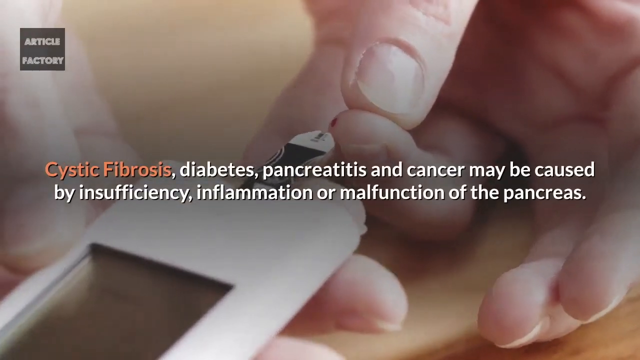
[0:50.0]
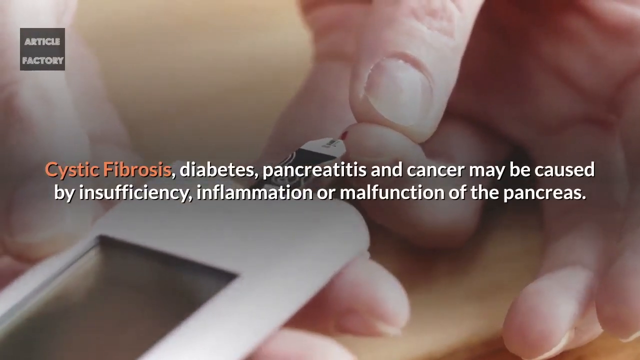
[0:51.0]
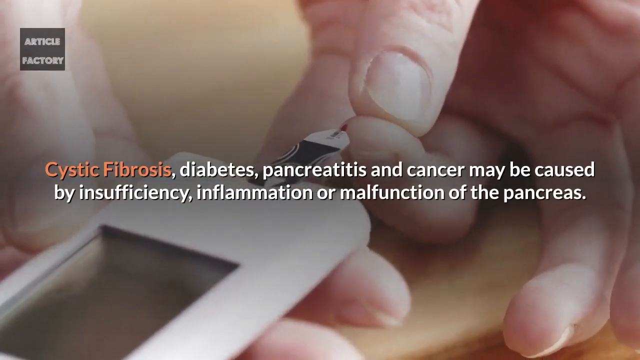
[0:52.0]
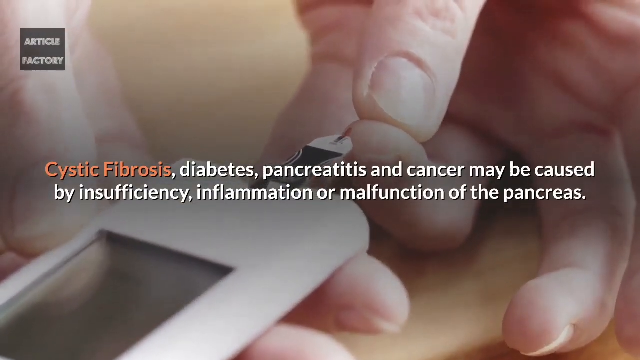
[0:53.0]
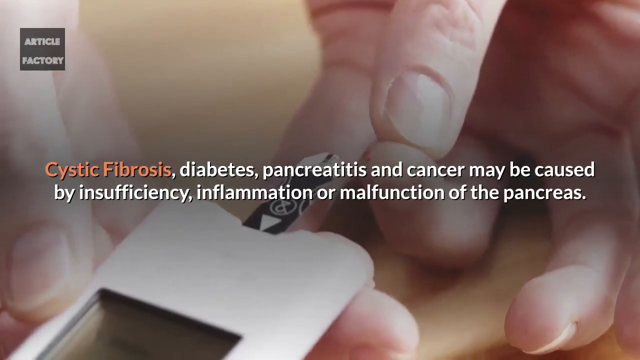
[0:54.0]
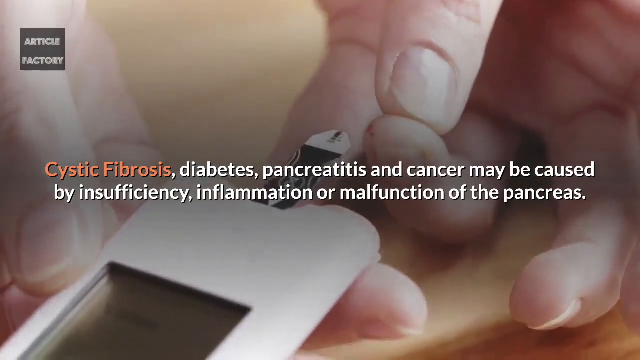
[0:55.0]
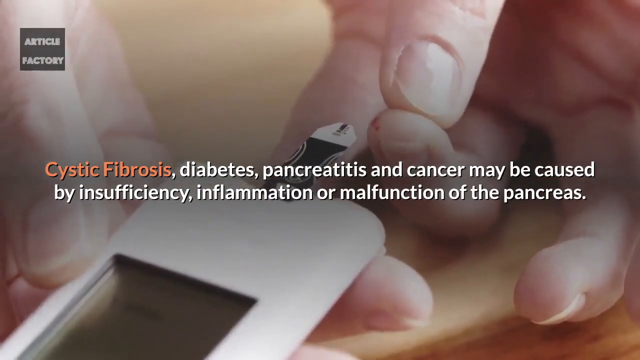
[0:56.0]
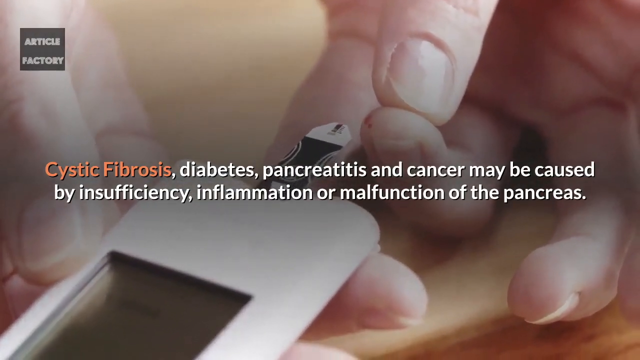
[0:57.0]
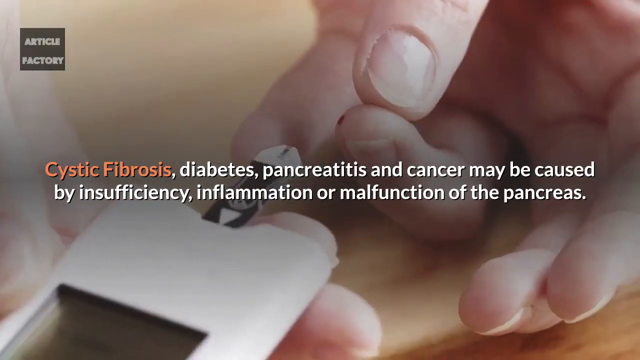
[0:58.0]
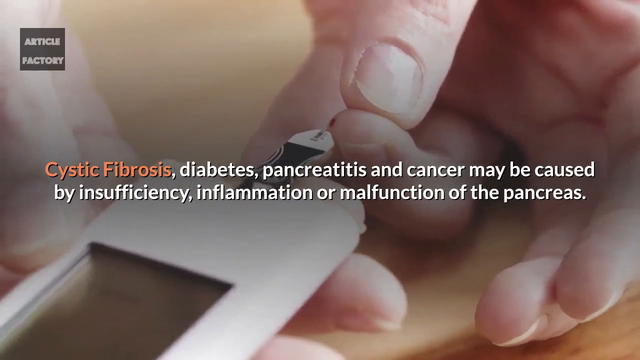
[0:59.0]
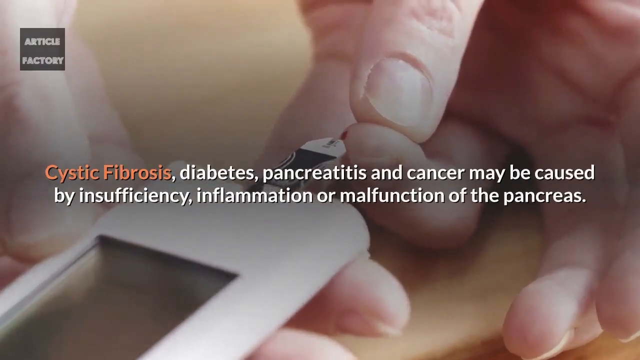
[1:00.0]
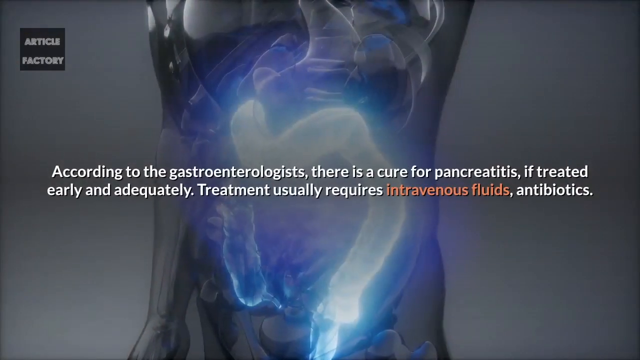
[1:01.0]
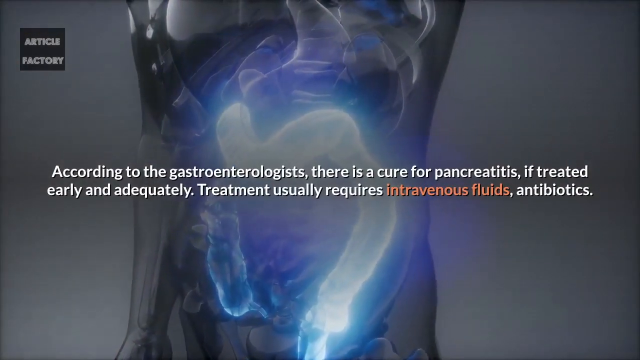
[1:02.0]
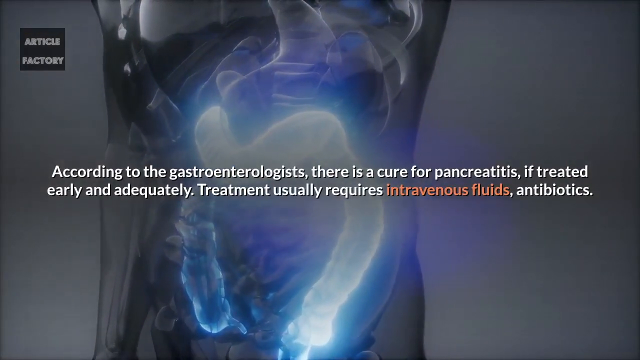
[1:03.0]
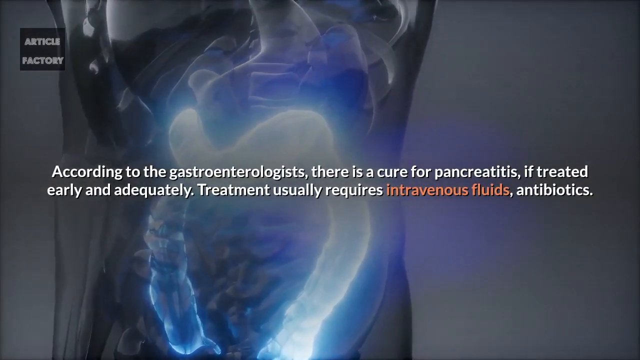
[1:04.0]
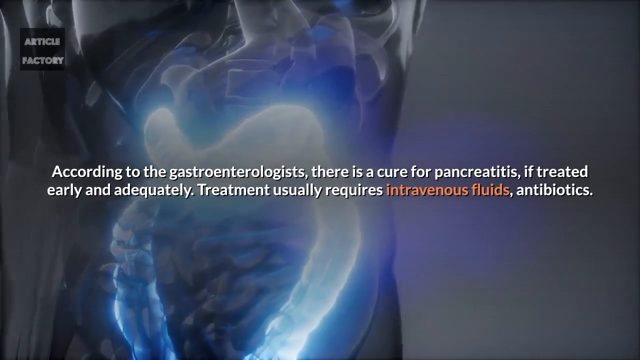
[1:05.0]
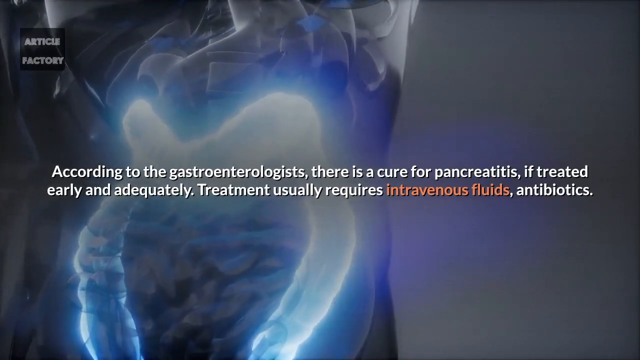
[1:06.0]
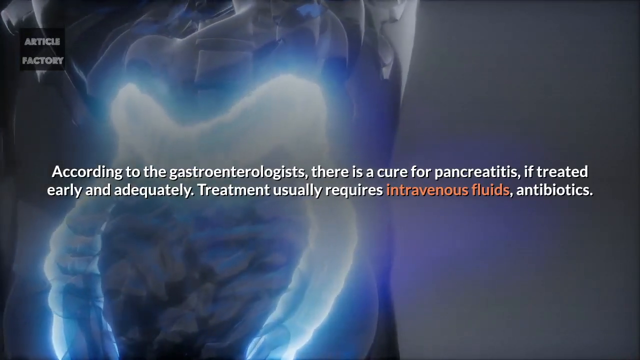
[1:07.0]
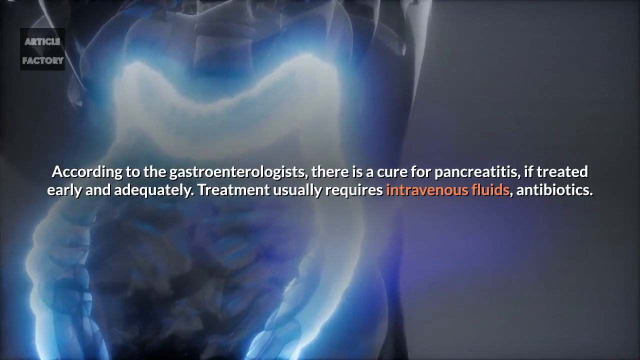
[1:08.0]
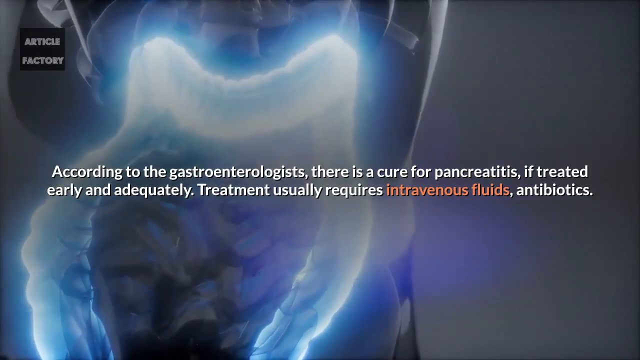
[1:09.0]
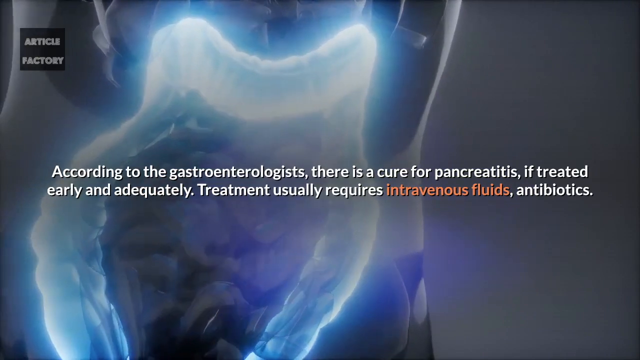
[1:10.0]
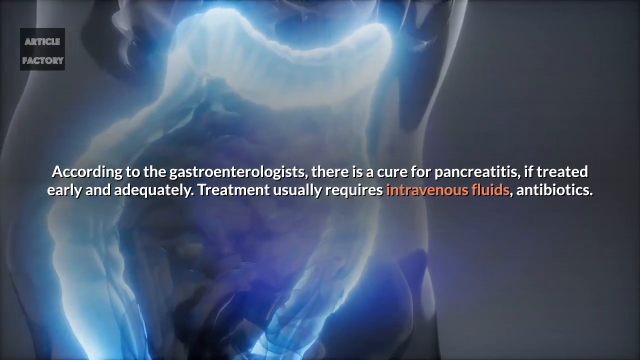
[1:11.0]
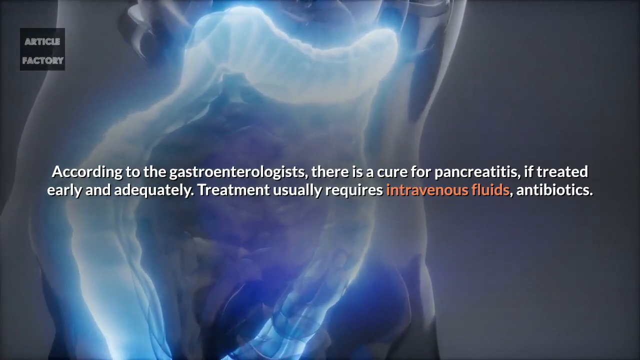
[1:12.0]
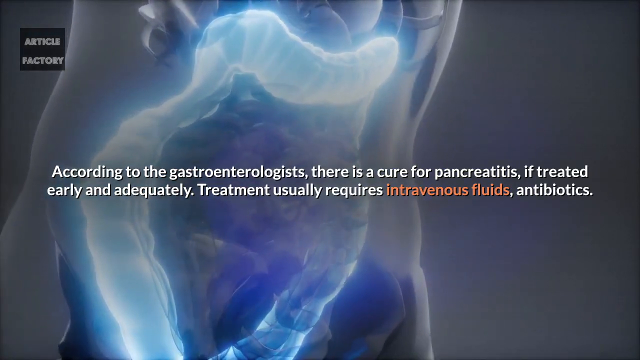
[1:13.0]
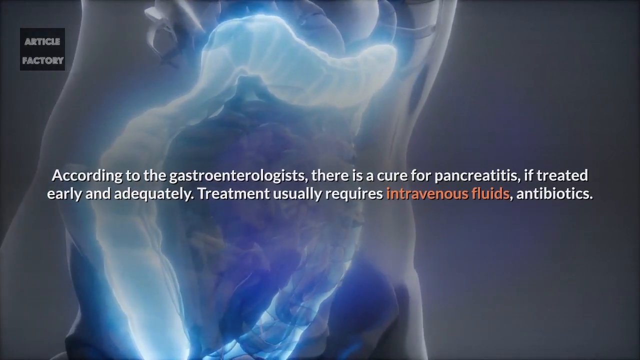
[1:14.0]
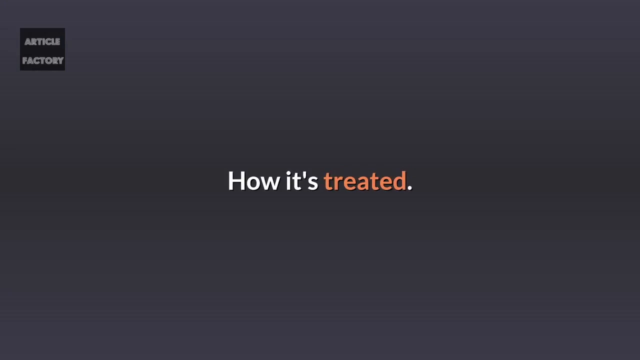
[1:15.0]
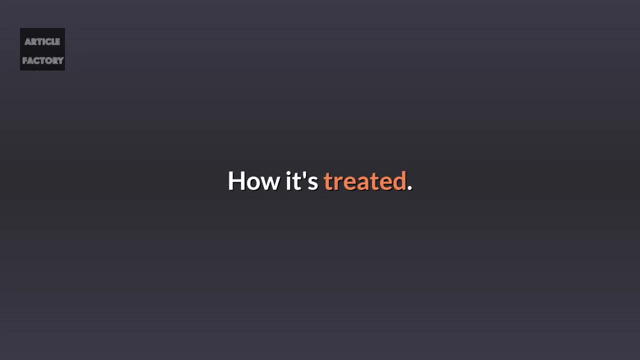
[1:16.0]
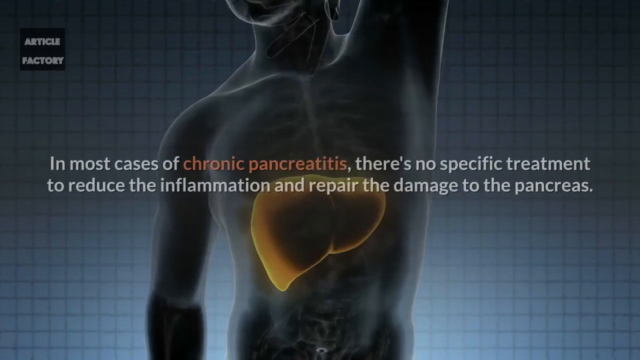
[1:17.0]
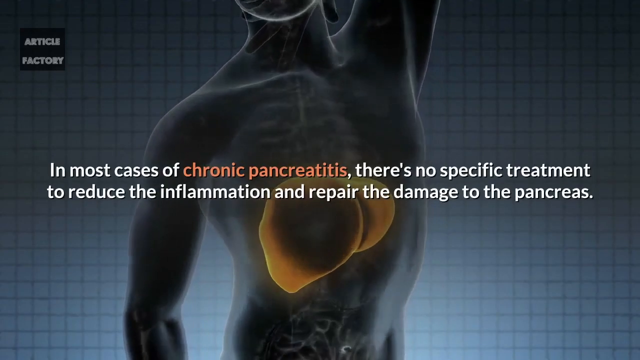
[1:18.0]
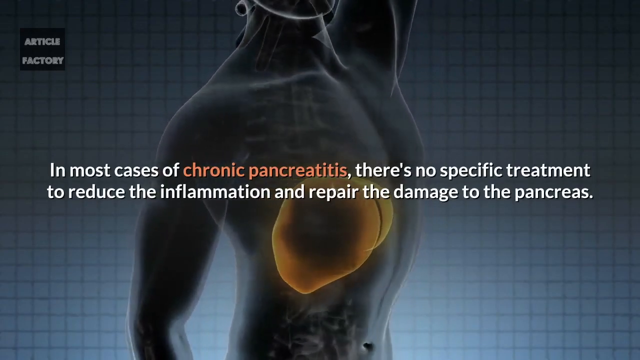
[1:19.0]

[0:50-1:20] Someone pricks their finger, drawing blood to get it tested, while the text reads "Cystic fibrosis, diabetes, pancreatitis and cancer may be caused by insufficiency, inflammation or malfunction of the pancreas." Then the text says "according to the gastroenterologist, there's a cure for pancreatitis. If treated early and adequately, treatment usually requires intravenous fluids and". An inside view of the stomach follows, showing the pancreas in blue and kind of glowing. The next part reads "how is treated", followed by "In most cases, chronic pancreatitis. There's no specific treatment to reduce inflammation and repair the damage to the pancreas."